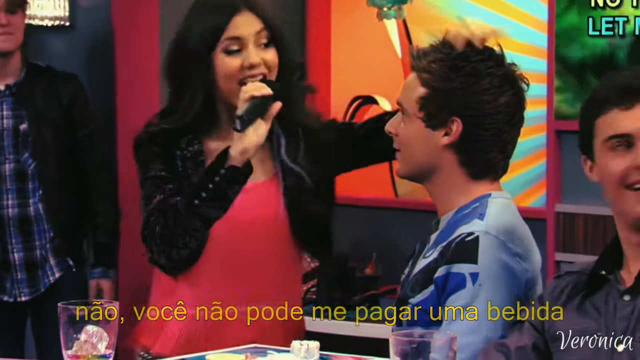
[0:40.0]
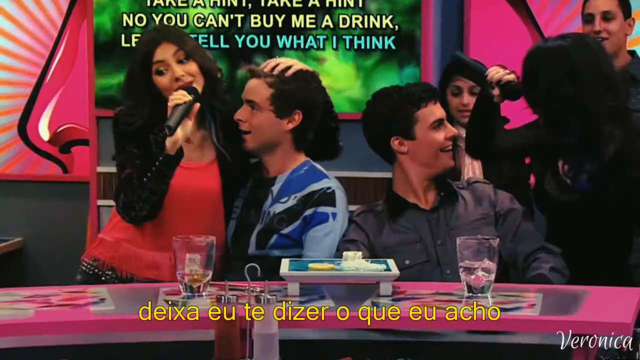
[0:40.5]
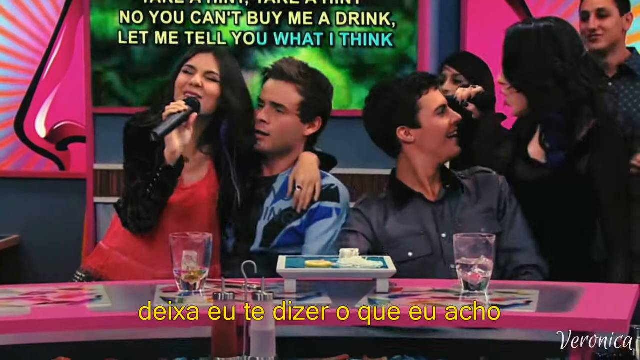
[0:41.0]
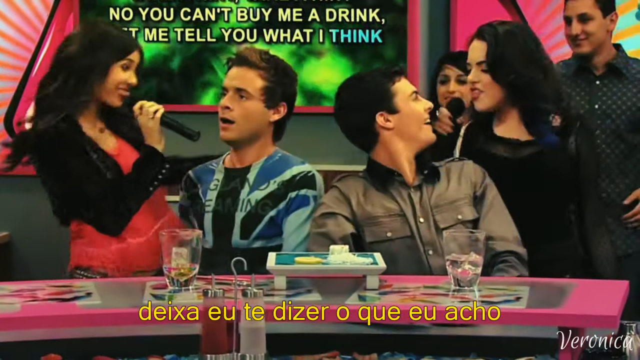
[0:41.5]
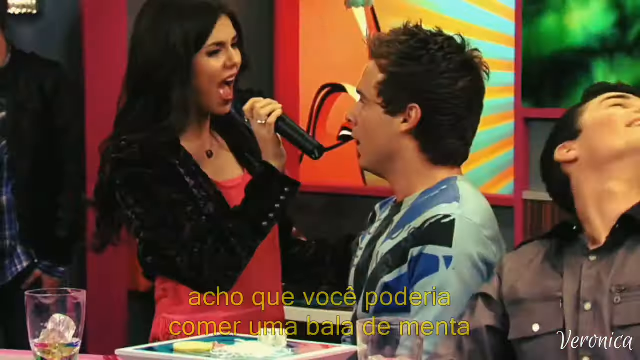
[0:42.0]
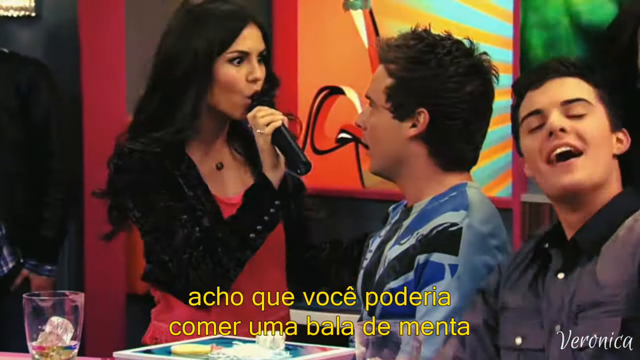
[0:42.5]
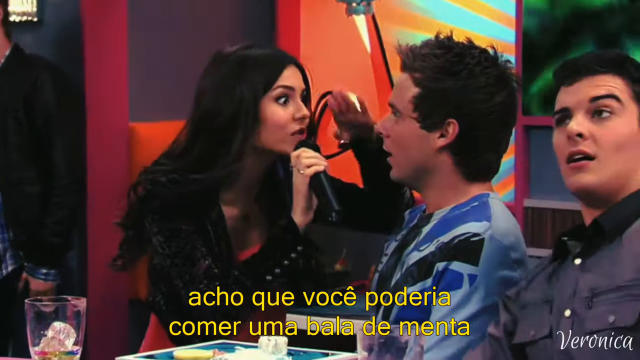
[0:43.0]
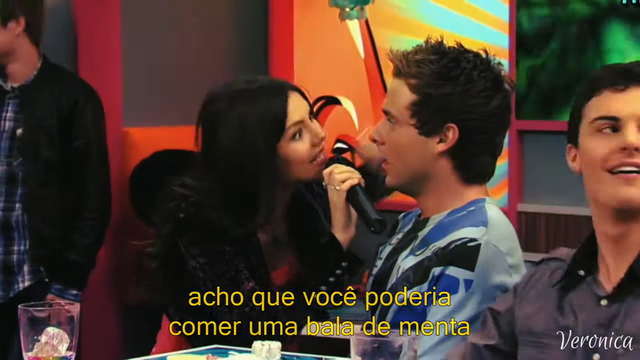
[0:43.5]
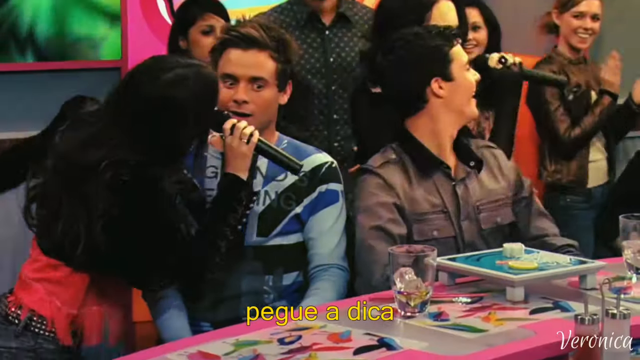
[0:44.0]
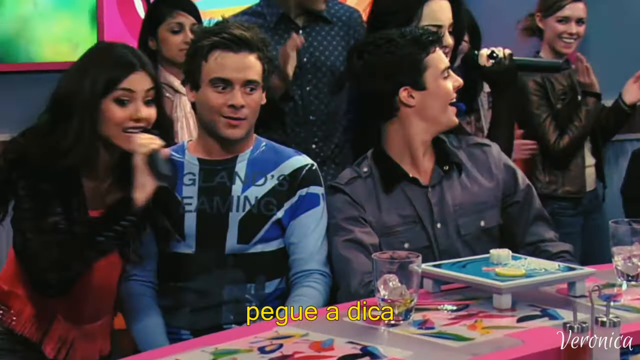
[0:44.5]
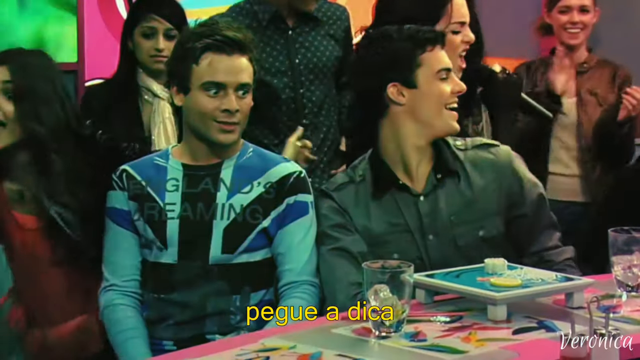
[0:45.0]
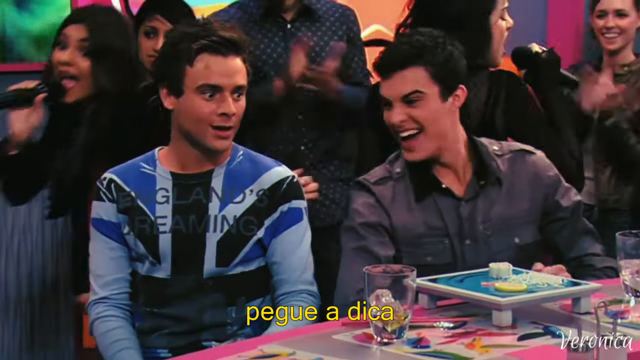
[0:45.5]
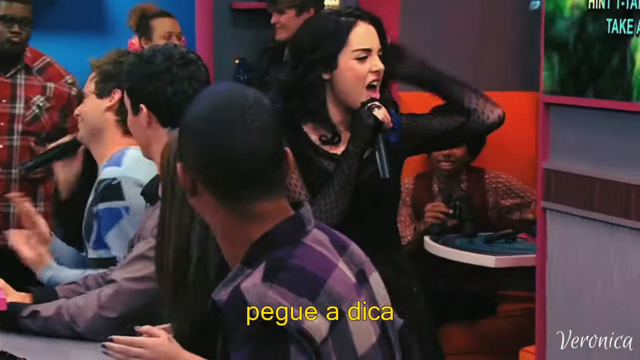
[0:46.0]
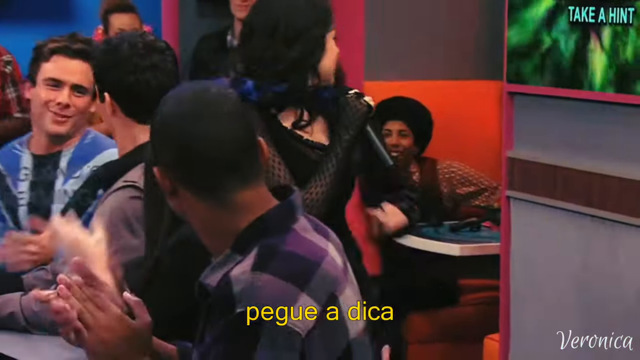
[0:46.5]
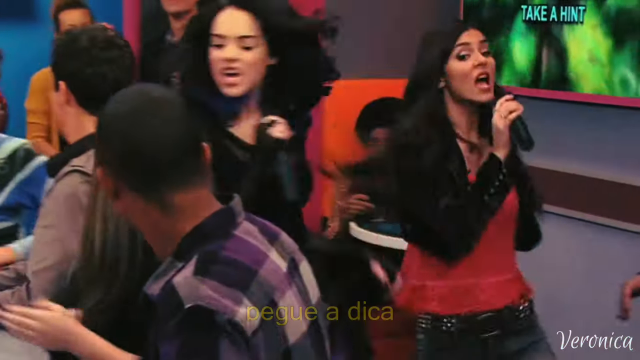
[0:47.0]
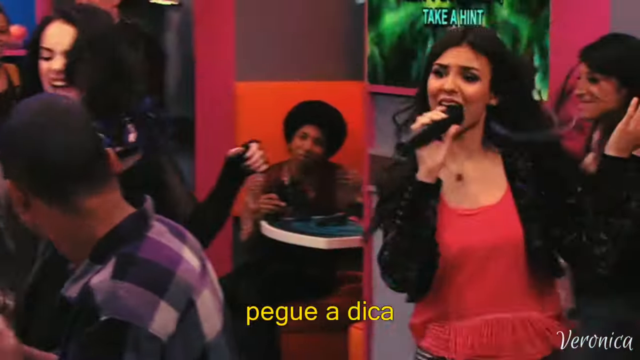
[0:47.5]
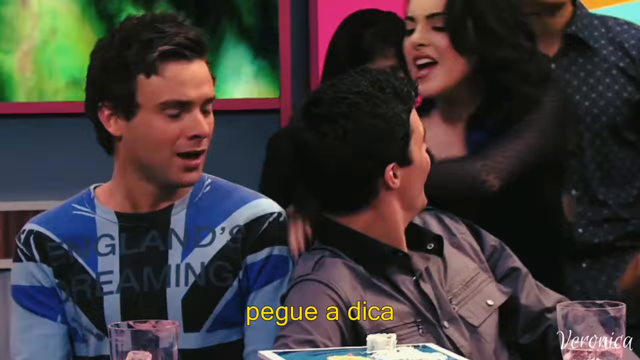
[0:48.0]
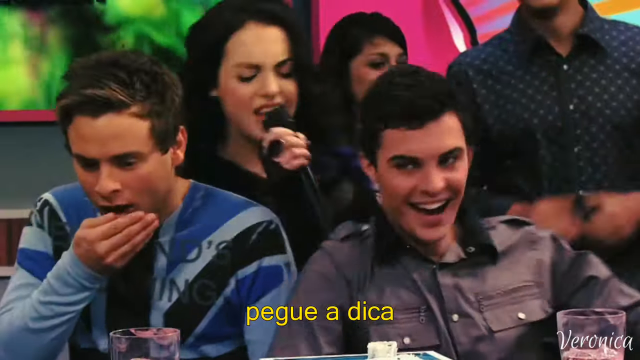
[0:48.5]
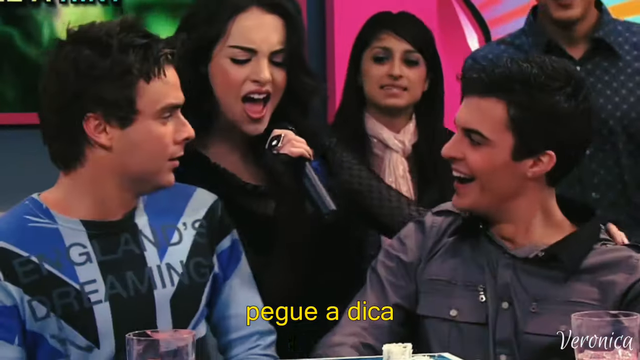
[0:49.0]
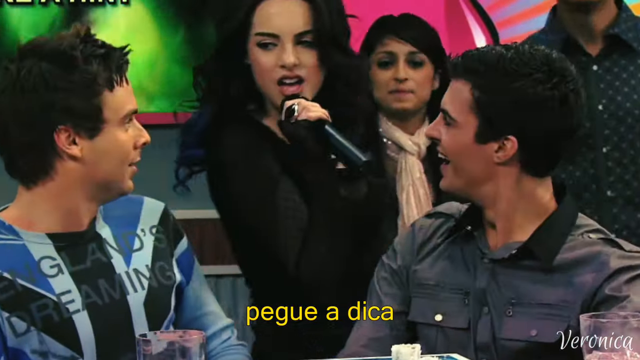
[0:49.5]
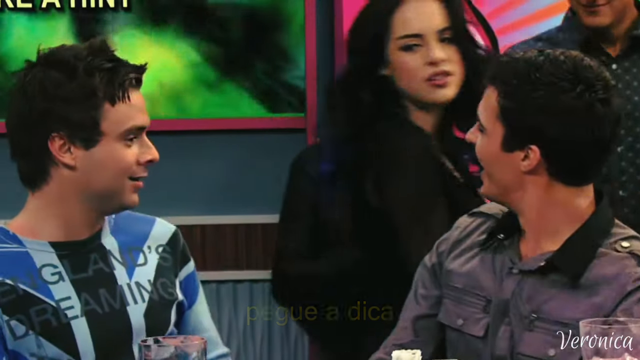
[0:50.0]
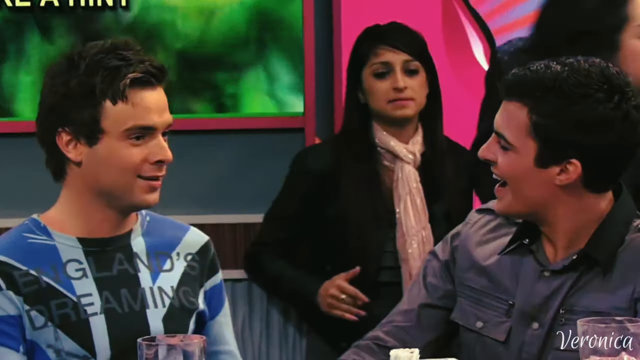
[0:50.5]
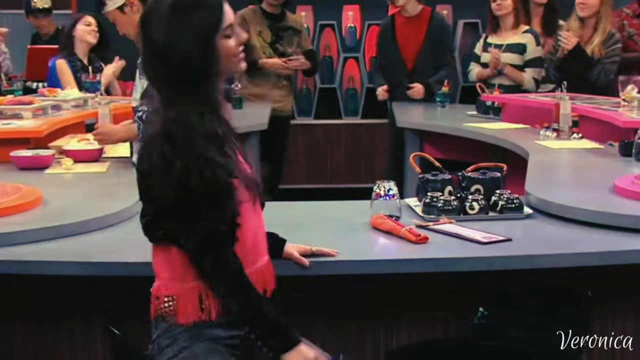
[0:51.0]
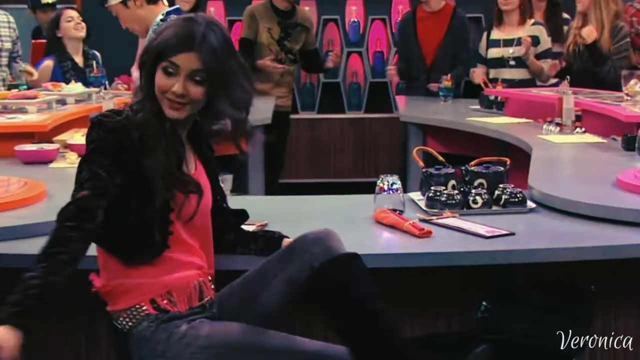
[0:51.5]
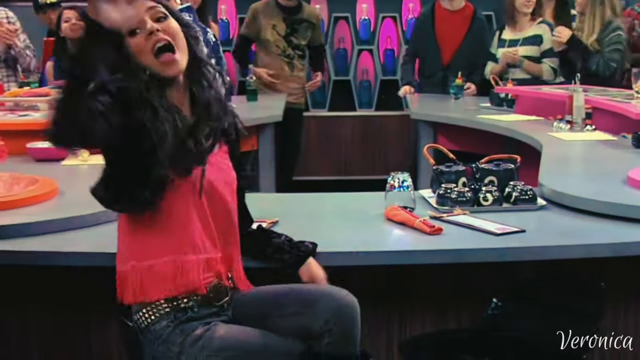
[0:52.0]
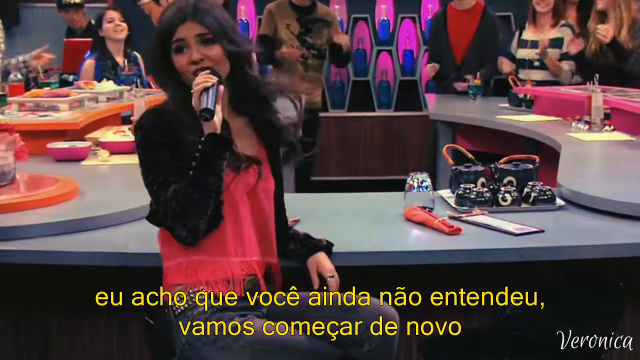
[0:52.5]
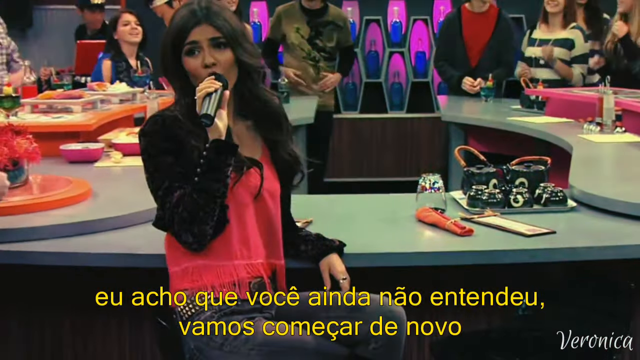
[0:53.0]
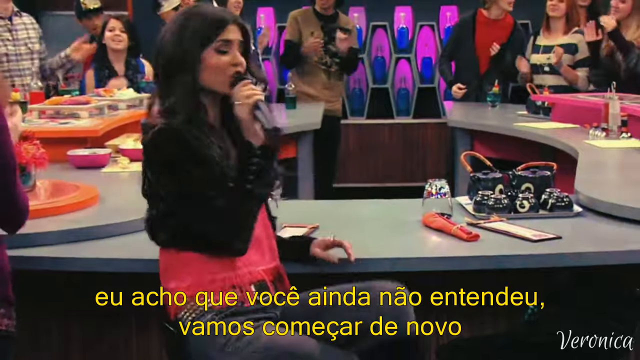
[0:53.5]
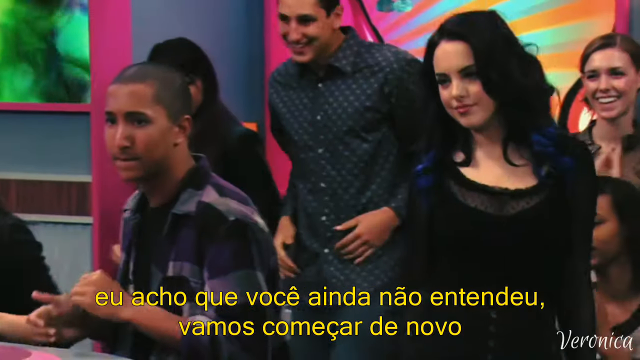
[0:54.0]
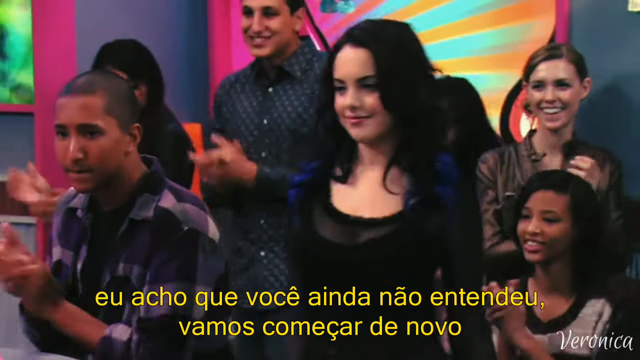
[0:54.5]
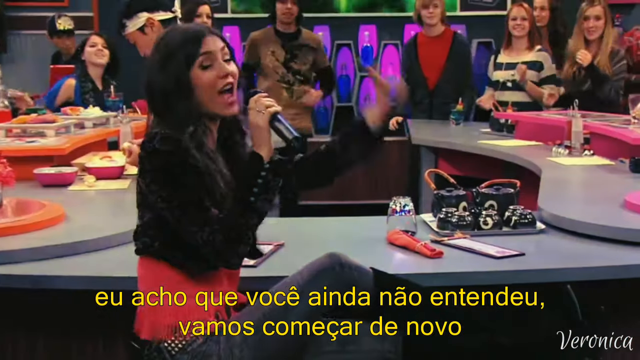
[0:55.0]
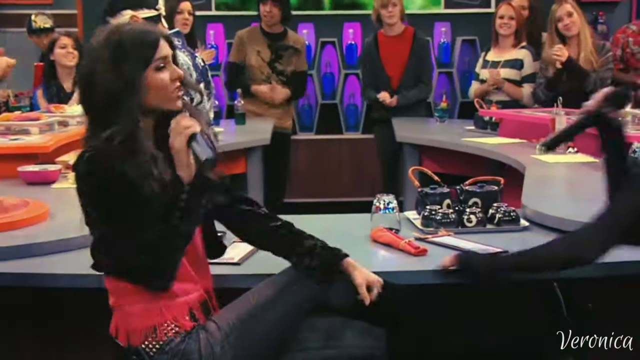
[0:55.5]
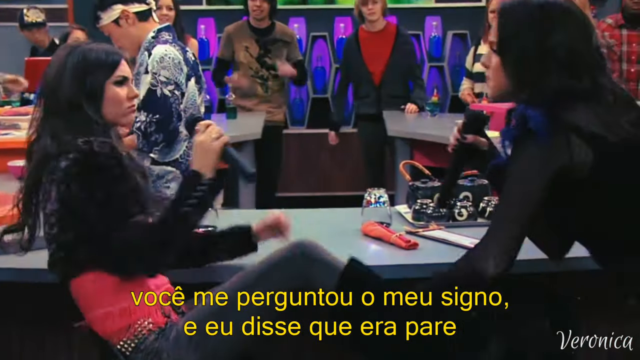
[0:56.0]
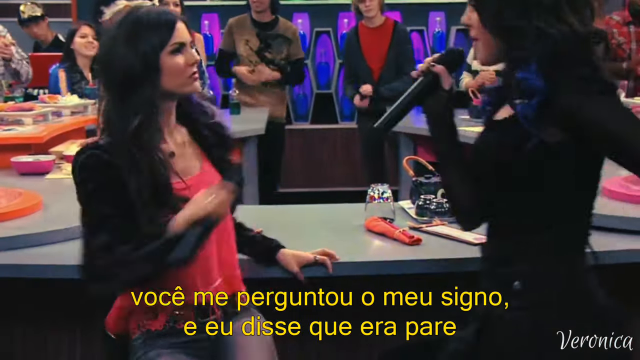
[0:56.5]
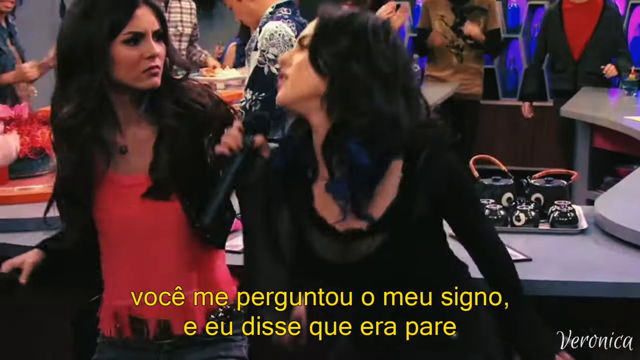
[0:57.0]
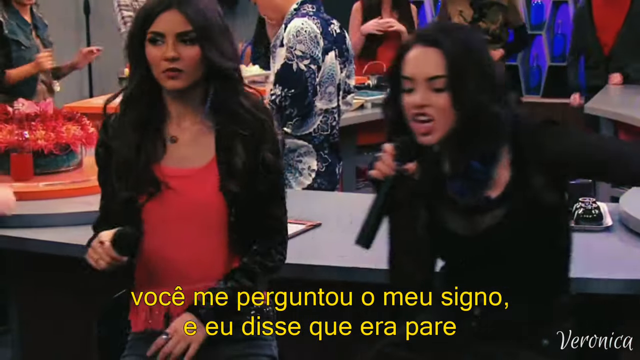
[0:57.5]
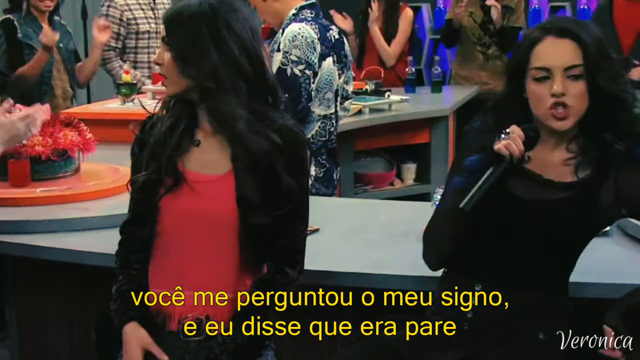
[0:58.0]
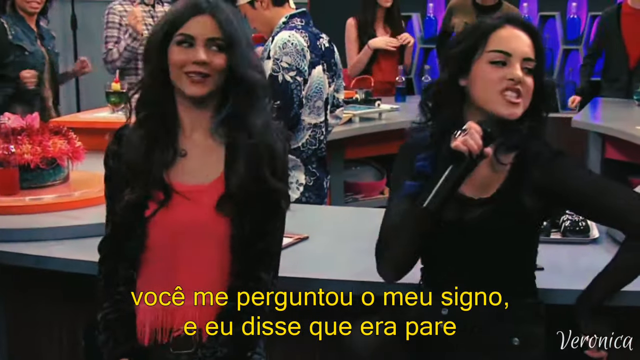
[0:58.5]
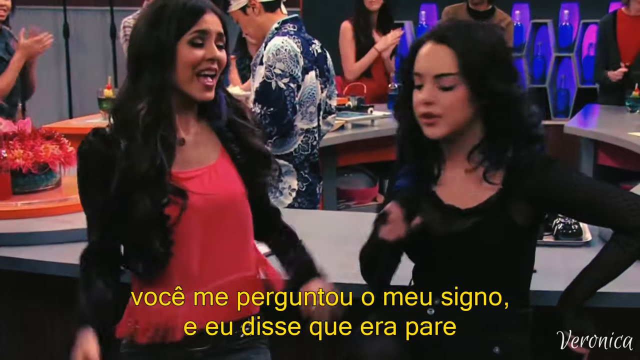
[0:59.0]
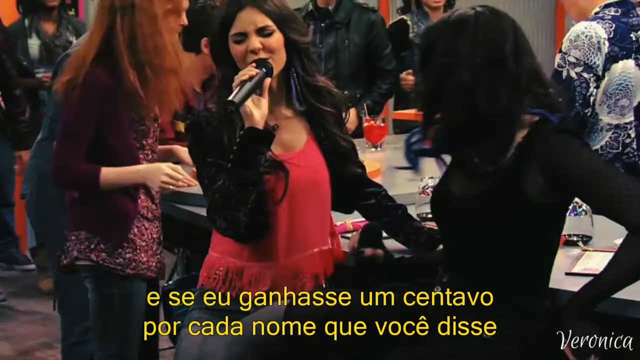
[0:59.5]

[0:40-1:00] The woman in the red top and black jacket plays with the hair of the brown-haired guy in the blue British flag top, getting close to him while singing. The woman in the black top looks directly at the other guy and sings close to him, though apparently not as close. They keep sort of dancing along while singing, and the crowd behind them gets into it, dancing around with them. The women start mouthing a lot of words with very expressive hand gestures; one of them briefly checks her breath, possibly hinting at a kiss. They then both sing as they move away from the two guys to another area of the restaurant where they appear to be about to sit. The woman in the pink top kind of sits back, puts her leg up, looks over, and signals that she possibly wants the guys to come over, while the other woman makes her way over to her as well.